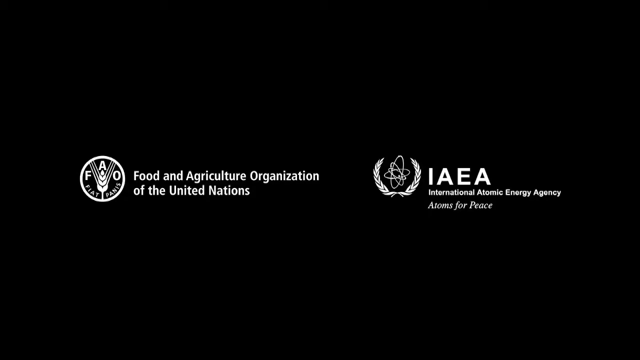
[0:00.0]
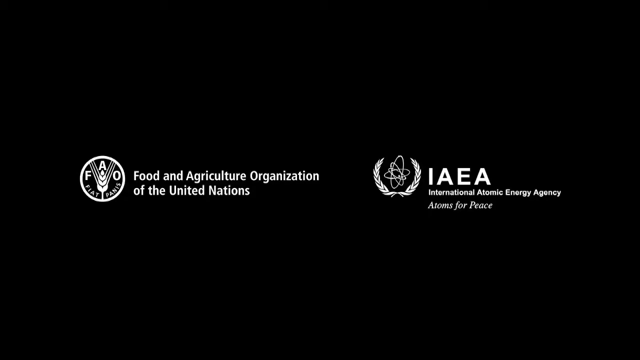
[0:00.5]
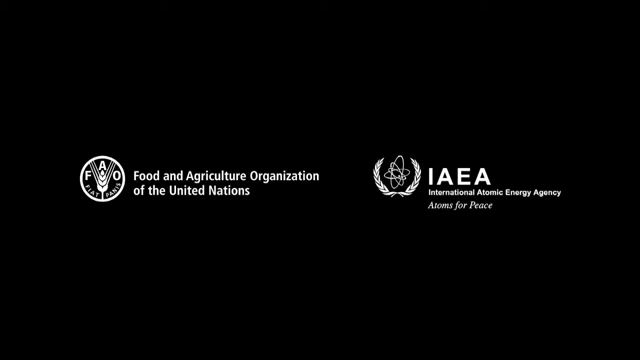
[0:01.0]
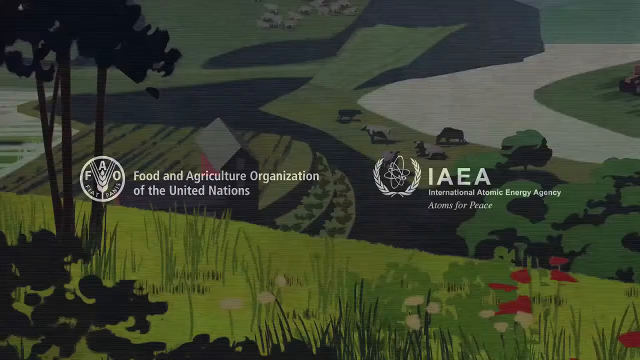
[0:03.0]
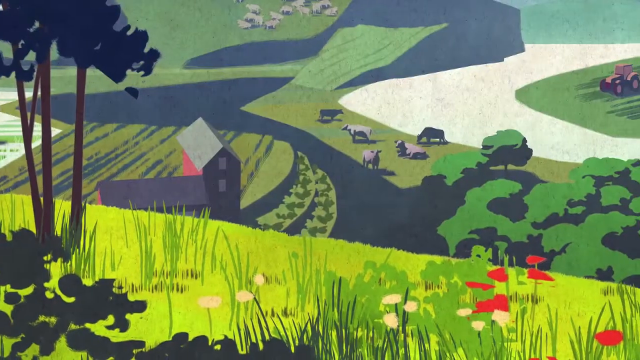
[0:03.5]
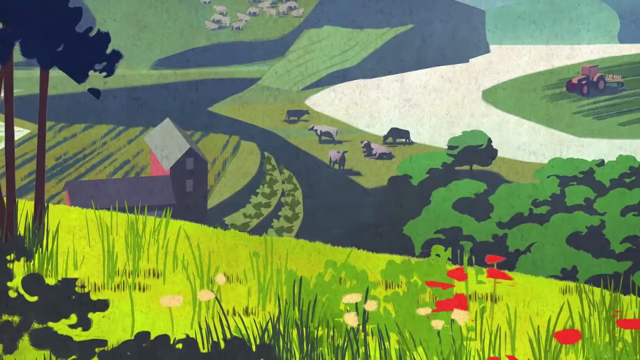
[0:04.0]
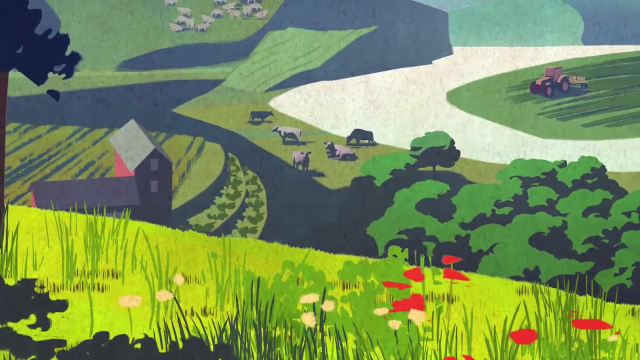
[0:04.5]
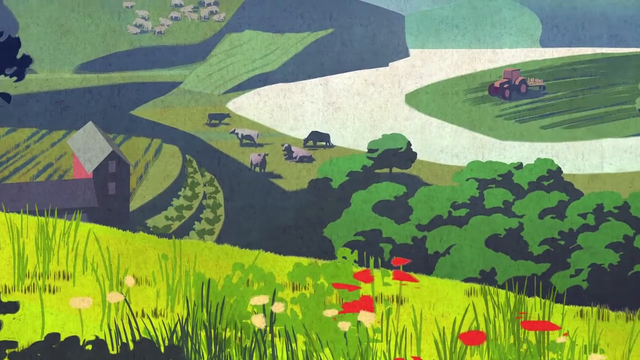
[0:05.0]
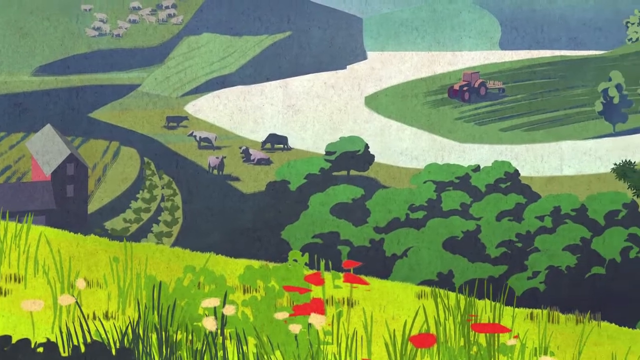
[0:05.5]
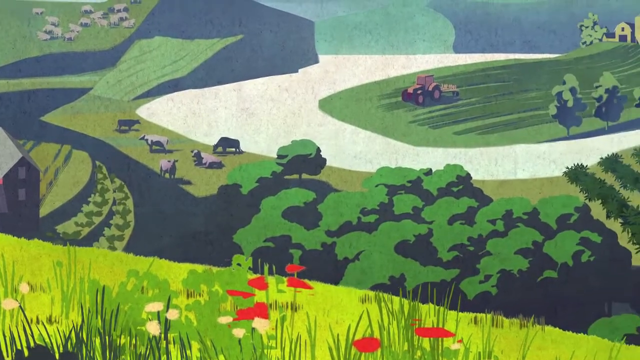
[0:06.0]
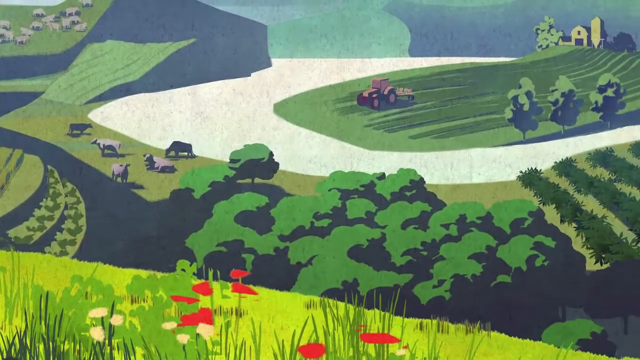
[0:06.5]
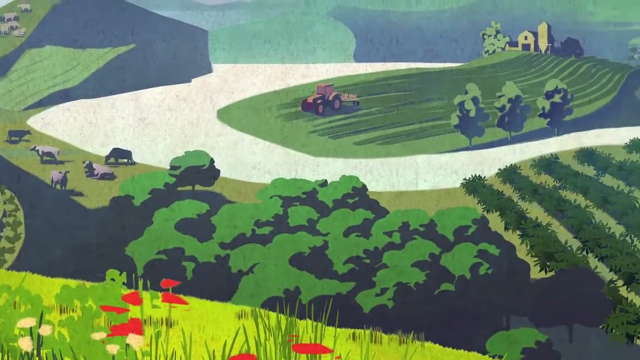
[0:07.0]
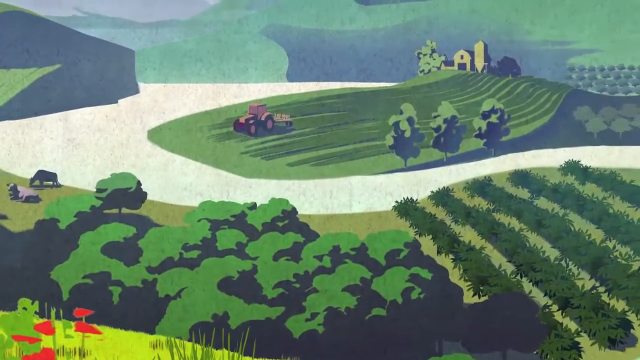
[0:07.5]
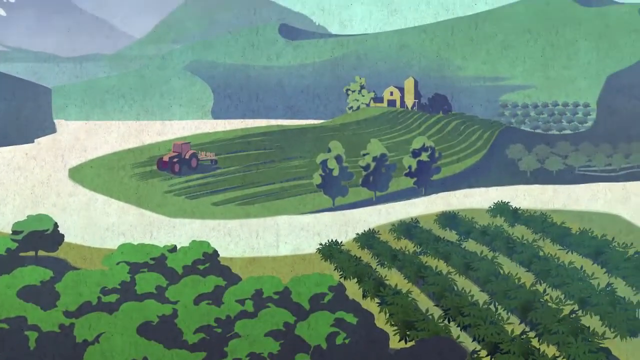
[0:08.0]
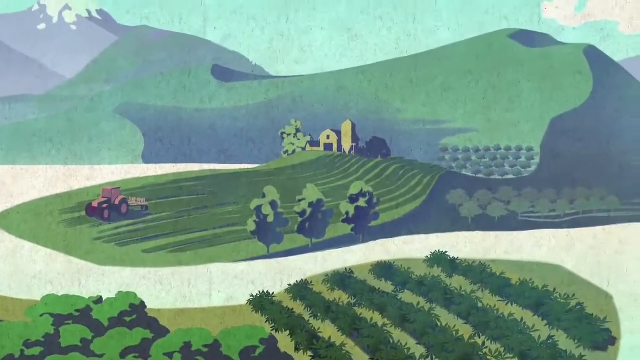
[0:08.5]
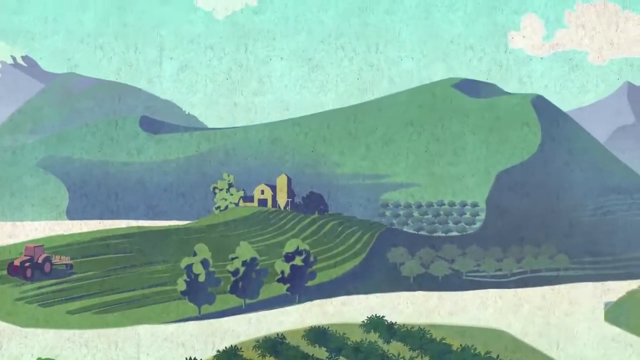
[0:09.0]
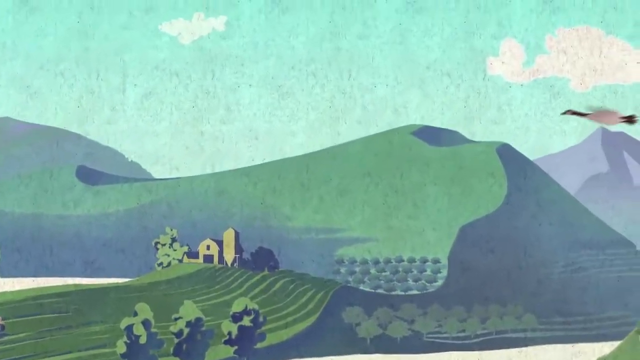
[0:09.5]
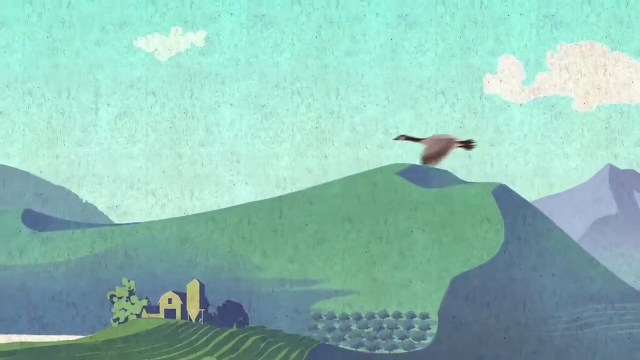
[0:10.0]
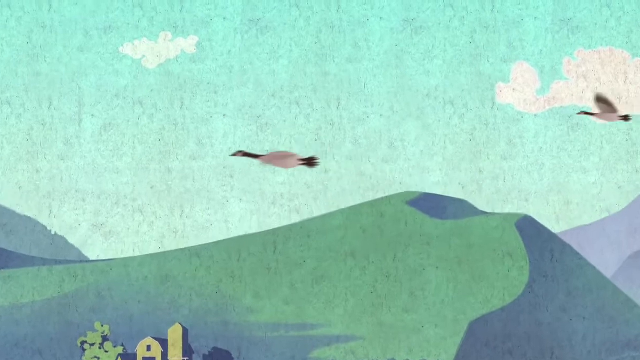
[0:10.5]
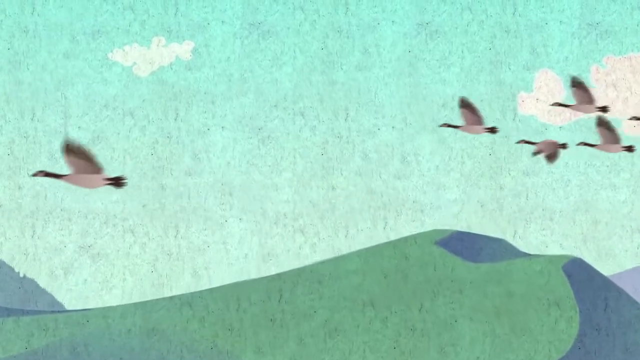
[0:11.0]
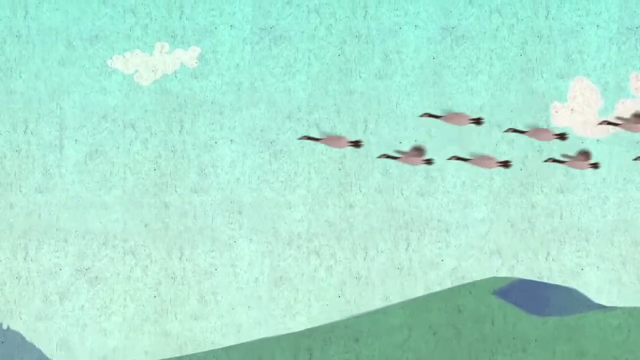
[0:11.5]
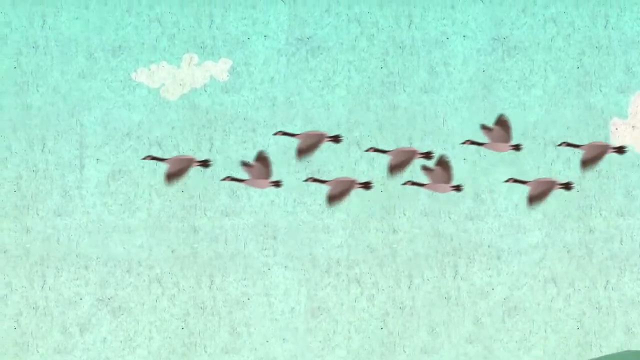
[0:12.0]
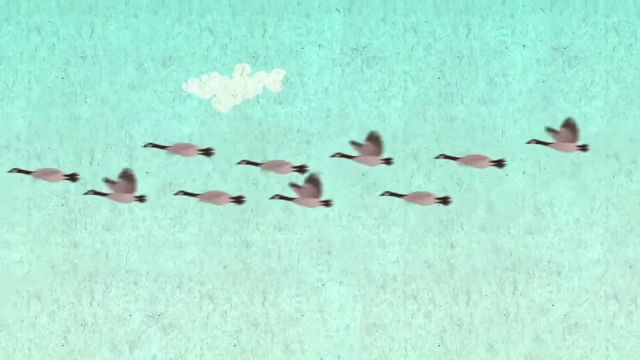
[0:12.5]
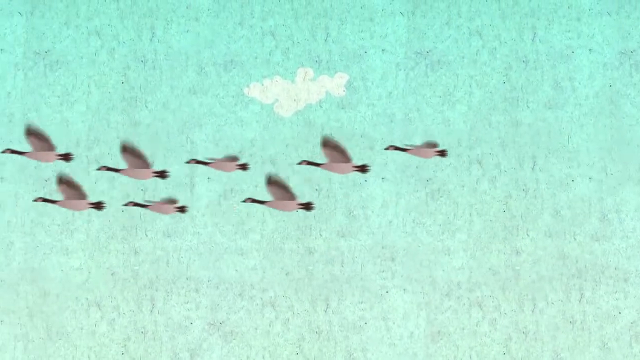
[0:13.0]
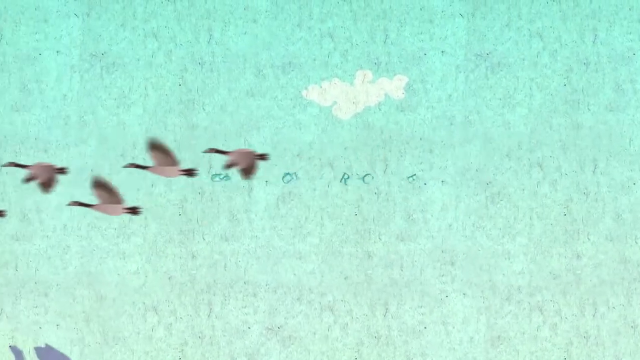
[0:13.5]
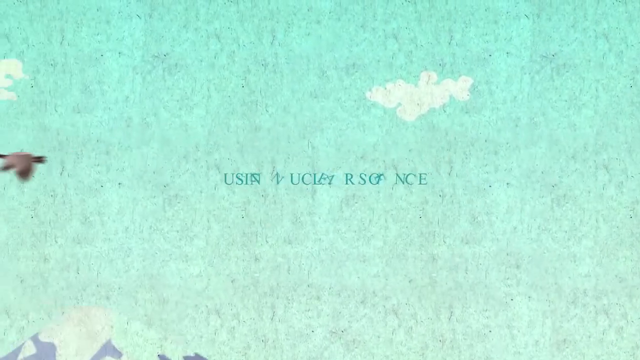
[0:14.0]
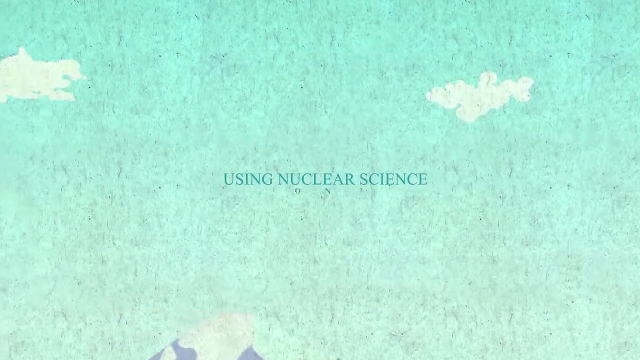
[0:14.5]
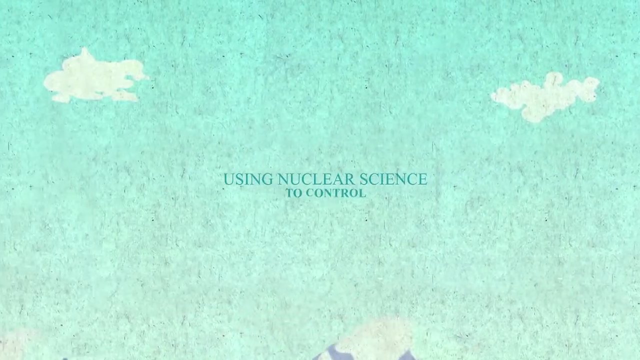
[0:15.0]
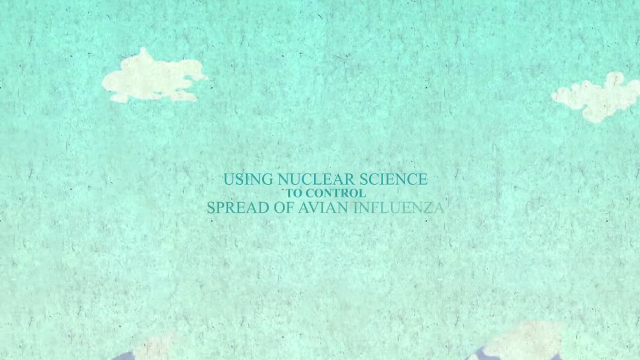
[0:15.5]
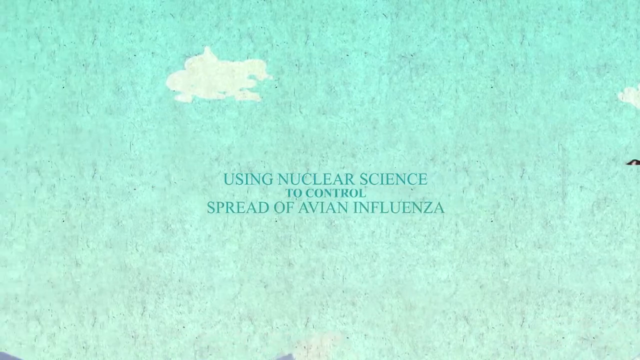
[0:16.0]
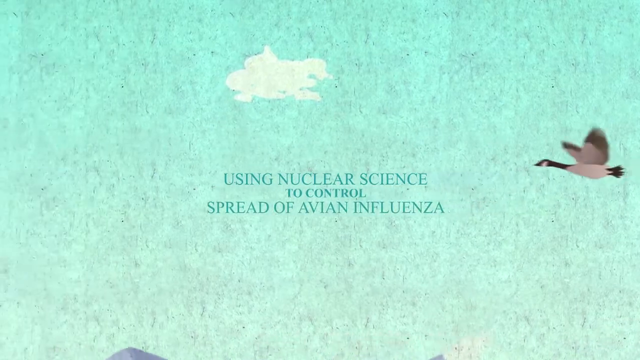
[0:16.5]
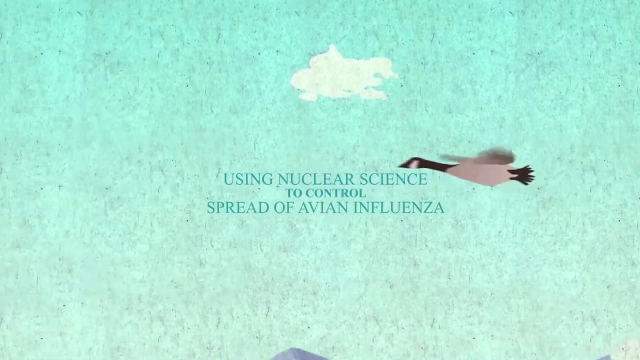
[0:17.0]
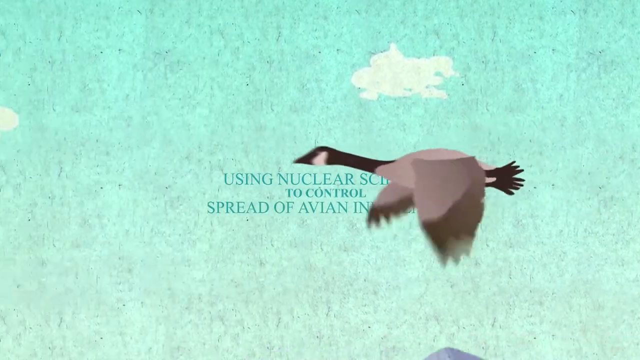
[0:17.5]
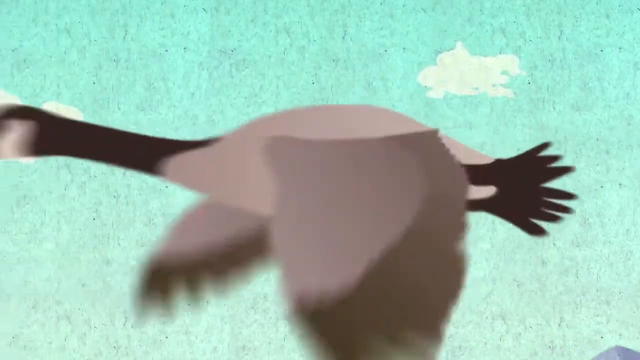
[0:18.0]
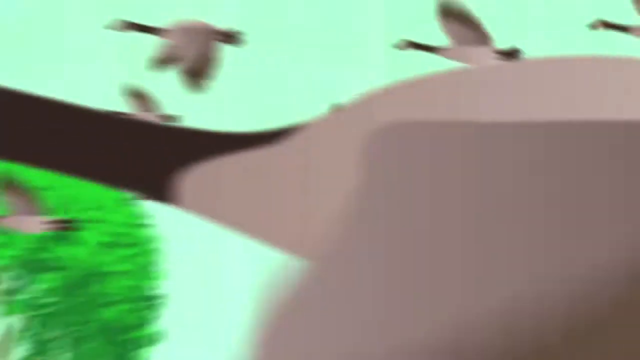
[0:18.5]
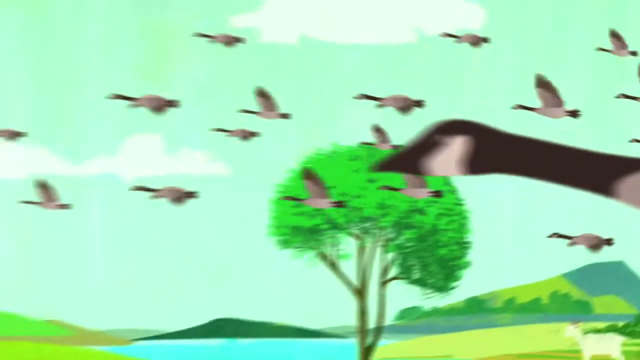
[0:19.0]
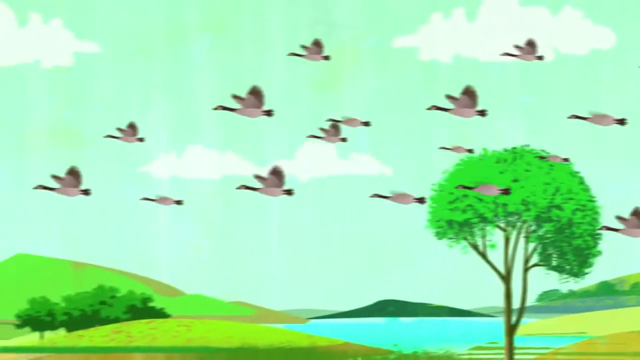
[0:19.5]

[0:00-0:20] The video opens on a black screen with two logos. The logo on the left reads "Food and Agriculture Organization of the United Nations" in white lettering, with a circular logo to the left of the text. On the right side of the screen is another logo that appears to read "IAEA" in big letters, with "International Atomic Energy Agency, Atoms for Peace" underneath. Next comes a very cartoonish view from the top of a mountain. To the left are purplish cows and greenish trees, and a tractor and a barn are in the distance, all in cartoonish colors. There are many different shades of green, and something white appears to run through the scene almost like an arc; as the camera moves, it looks like a white path or road leading up to the barn. The camera moves up into the sky, where a goose flies by, followed by several geese flying in unison. The words "using nuclear science to control spread of avian influenza" appear. The view zooms in on one of the geese flying toward the camera at an angle or in side view, and then the flock of geese is shown flying in a V.